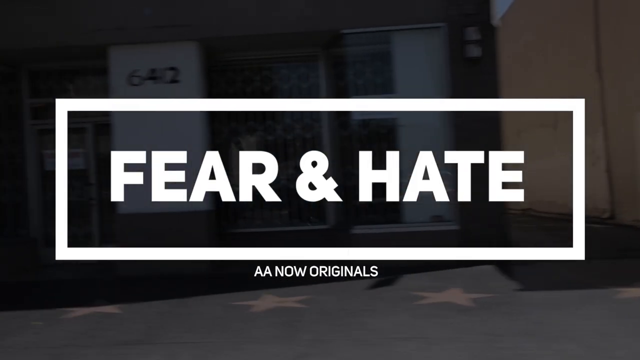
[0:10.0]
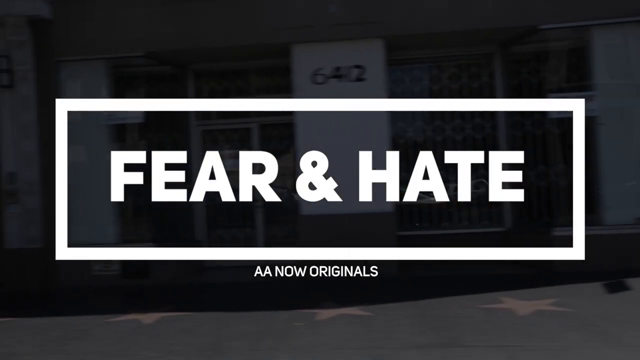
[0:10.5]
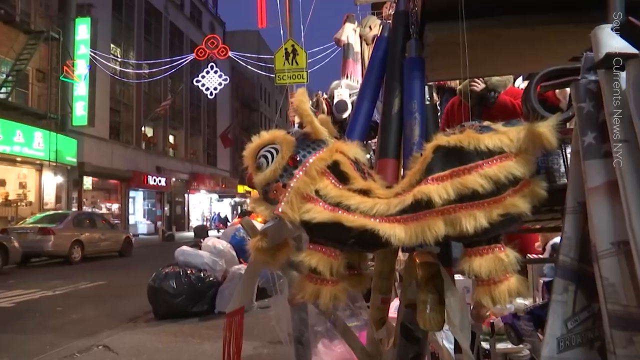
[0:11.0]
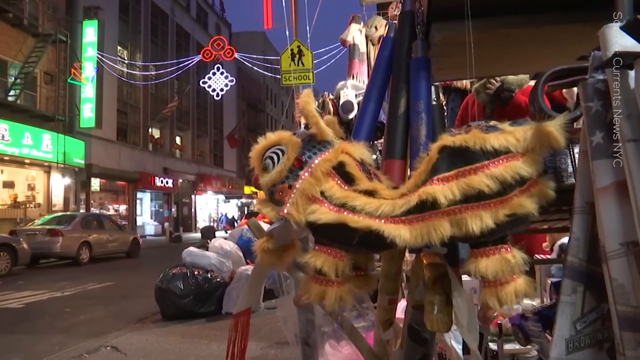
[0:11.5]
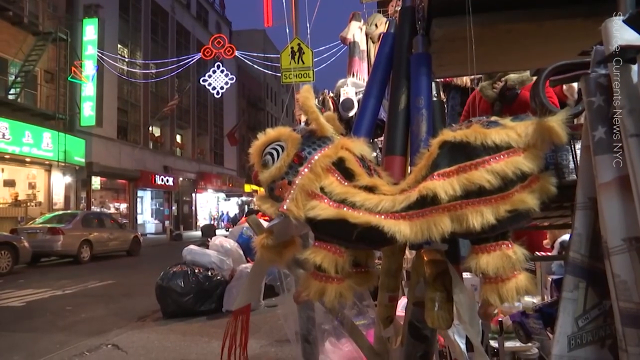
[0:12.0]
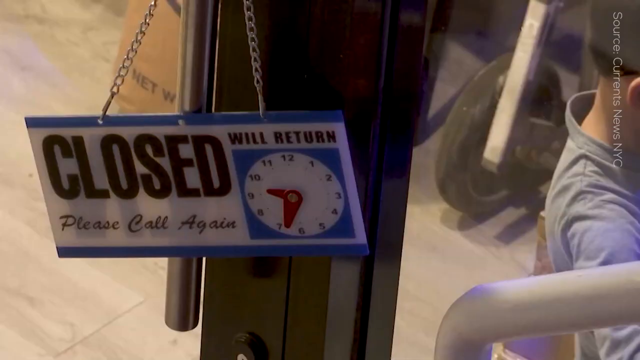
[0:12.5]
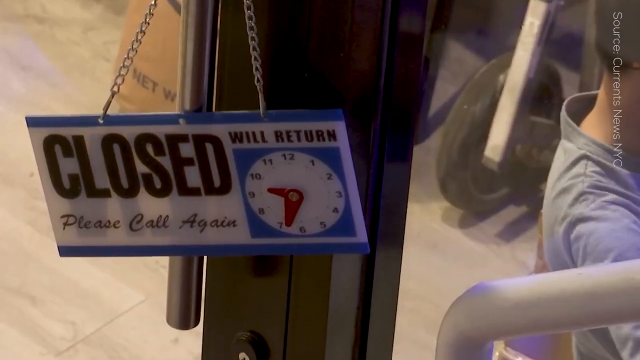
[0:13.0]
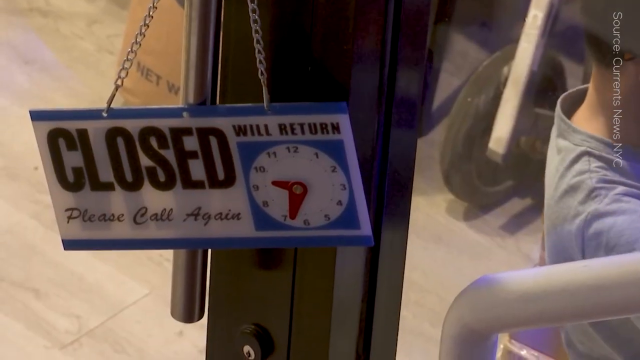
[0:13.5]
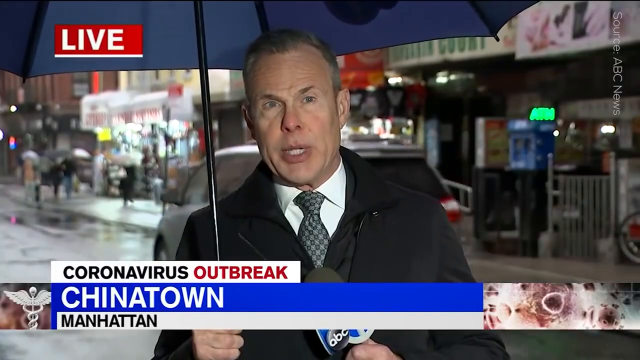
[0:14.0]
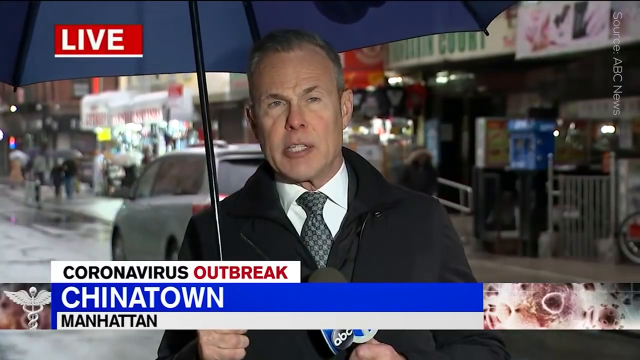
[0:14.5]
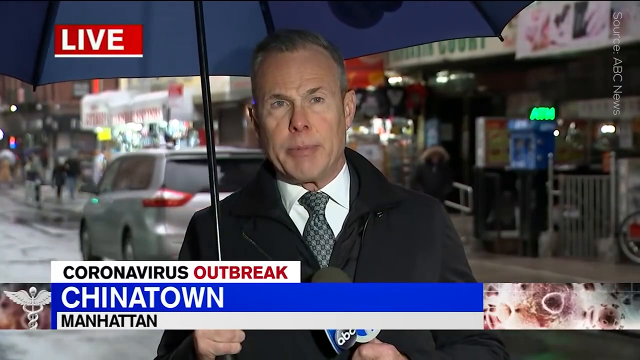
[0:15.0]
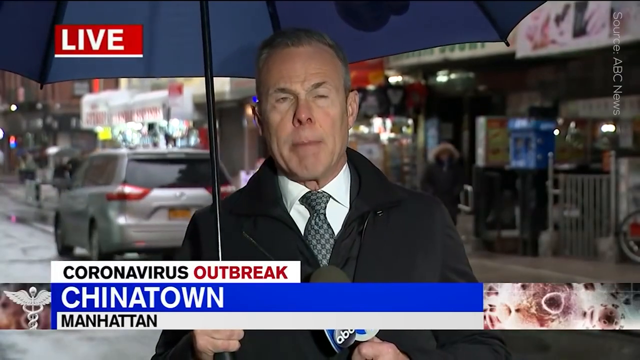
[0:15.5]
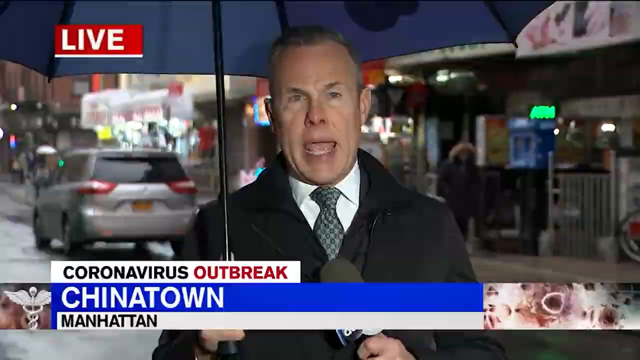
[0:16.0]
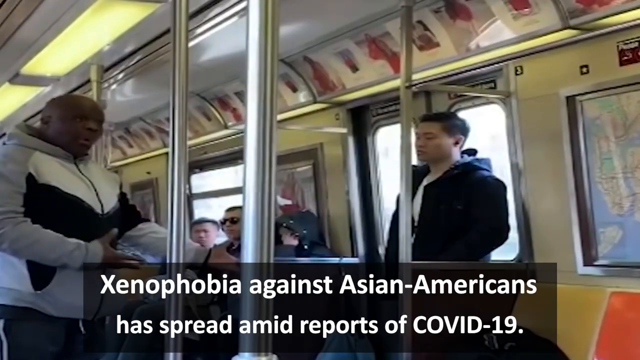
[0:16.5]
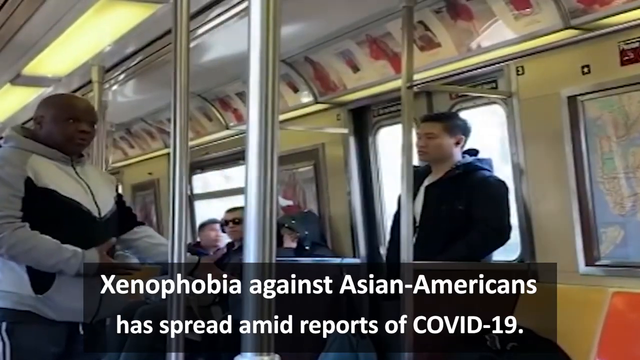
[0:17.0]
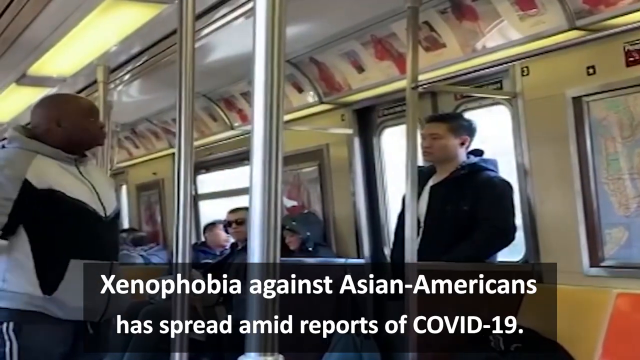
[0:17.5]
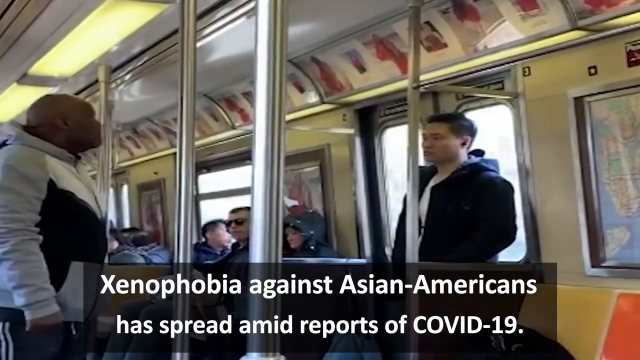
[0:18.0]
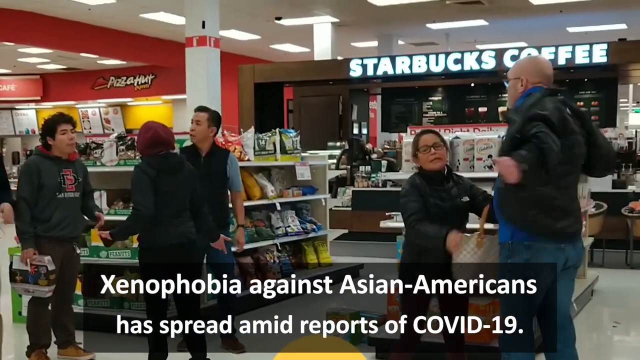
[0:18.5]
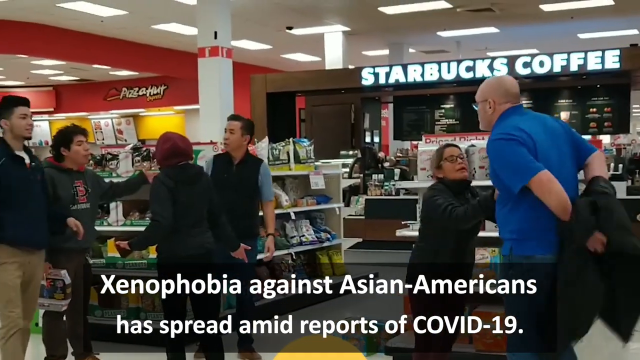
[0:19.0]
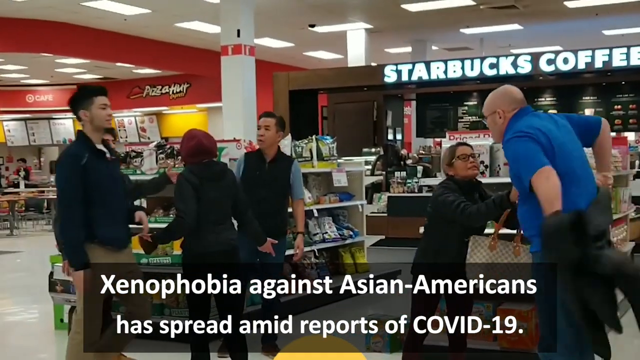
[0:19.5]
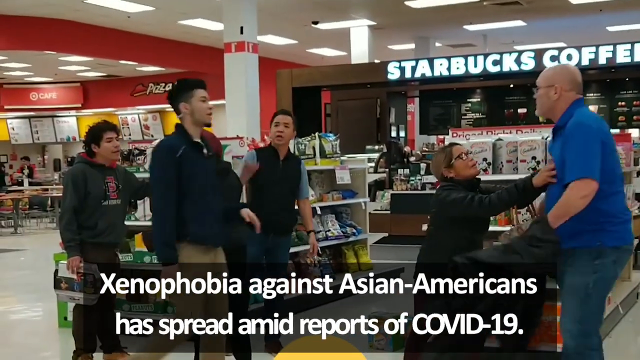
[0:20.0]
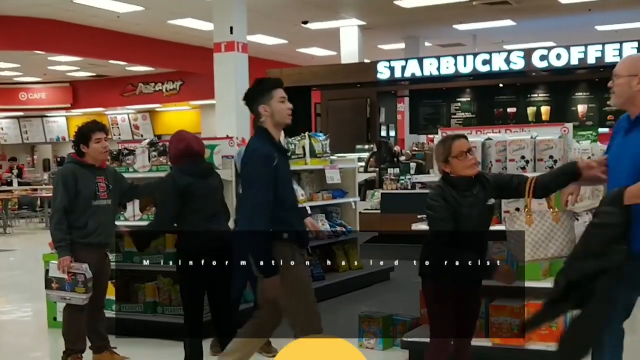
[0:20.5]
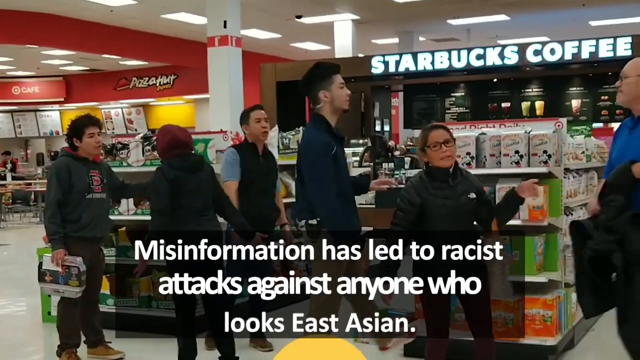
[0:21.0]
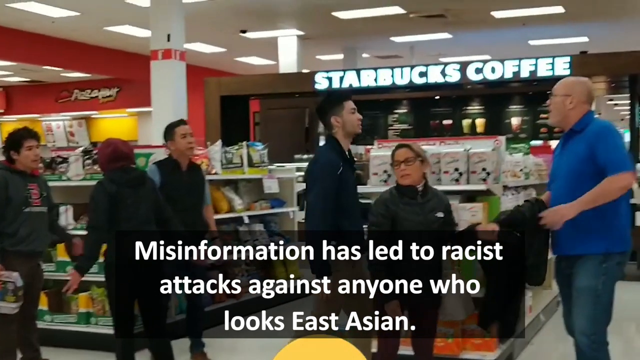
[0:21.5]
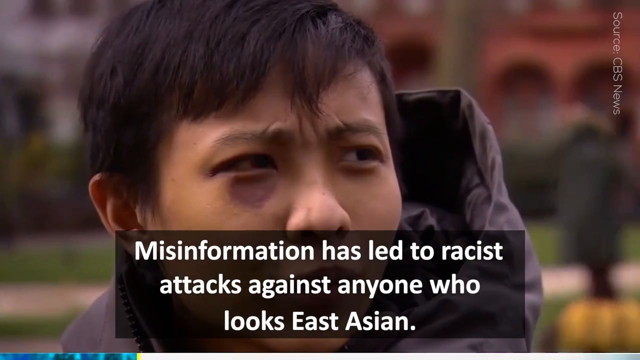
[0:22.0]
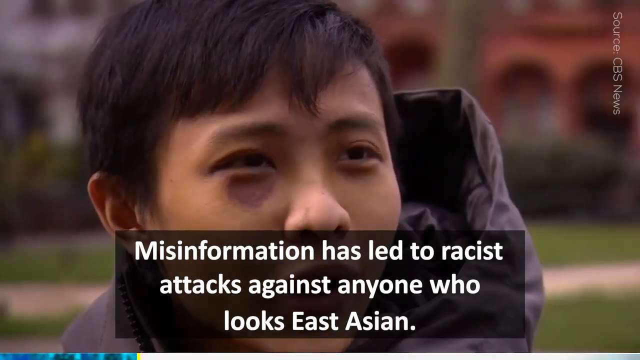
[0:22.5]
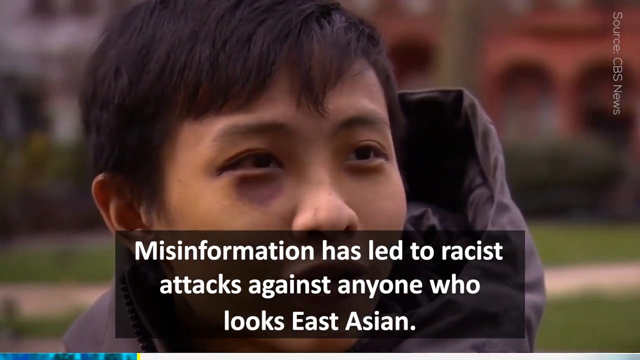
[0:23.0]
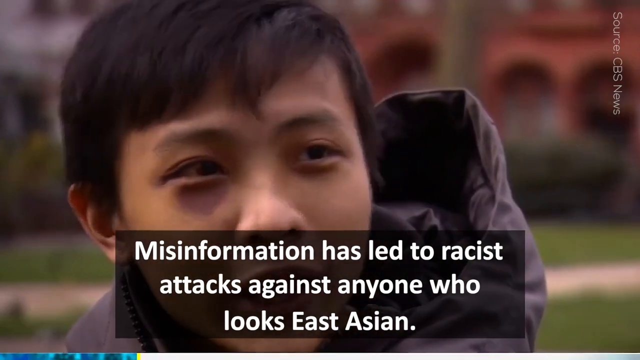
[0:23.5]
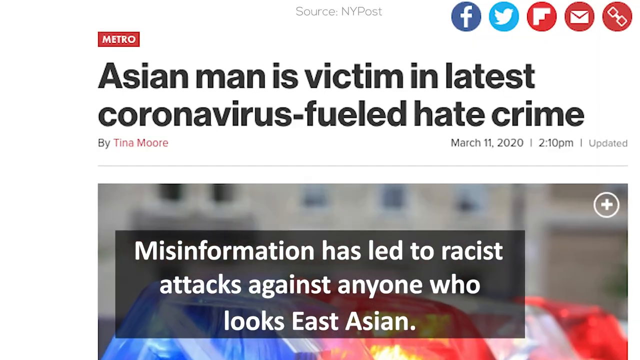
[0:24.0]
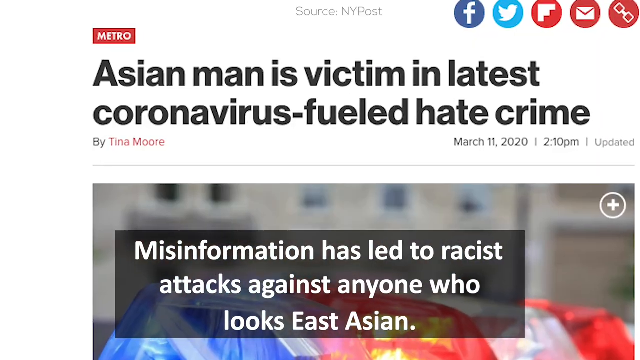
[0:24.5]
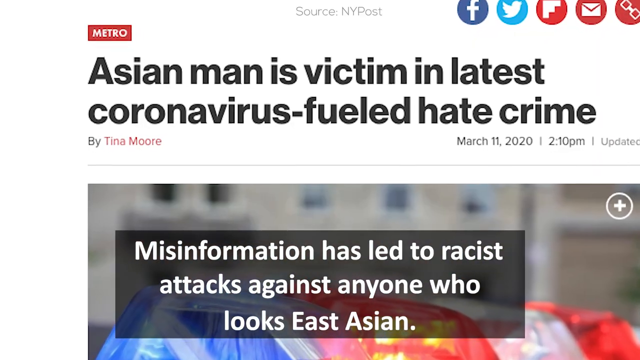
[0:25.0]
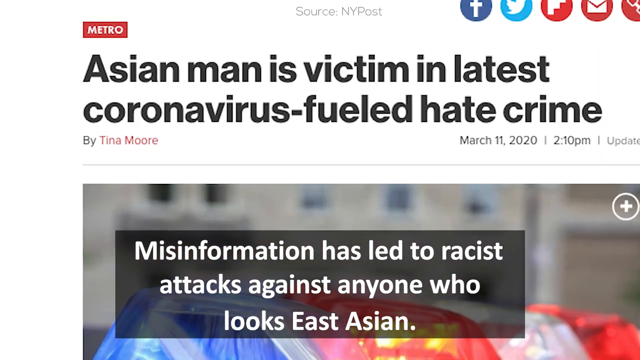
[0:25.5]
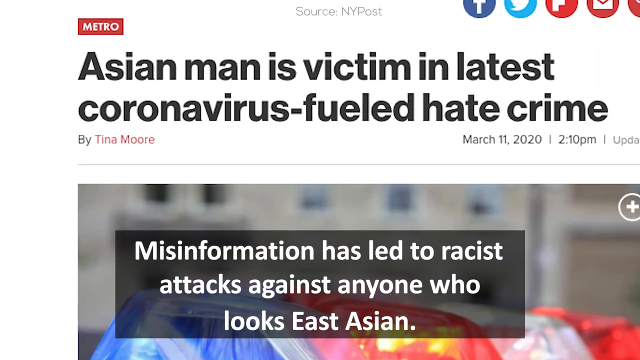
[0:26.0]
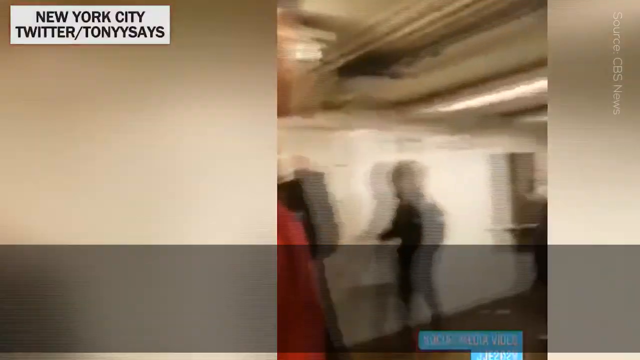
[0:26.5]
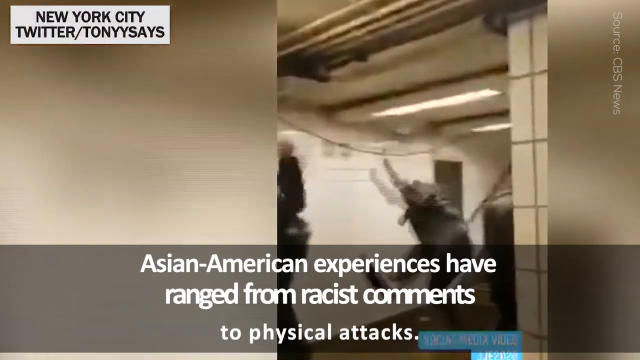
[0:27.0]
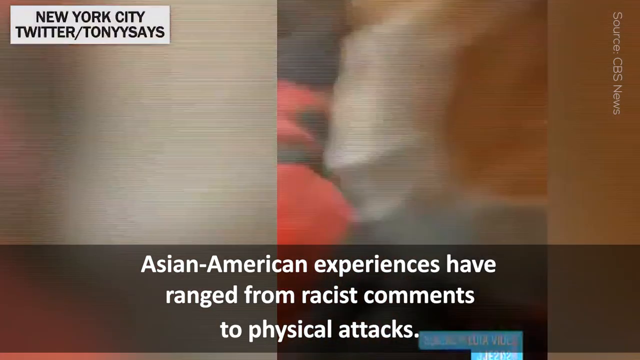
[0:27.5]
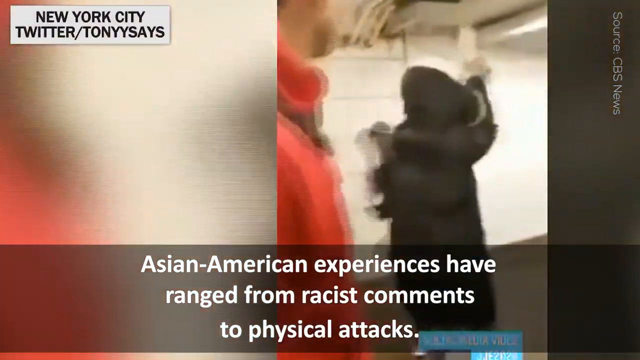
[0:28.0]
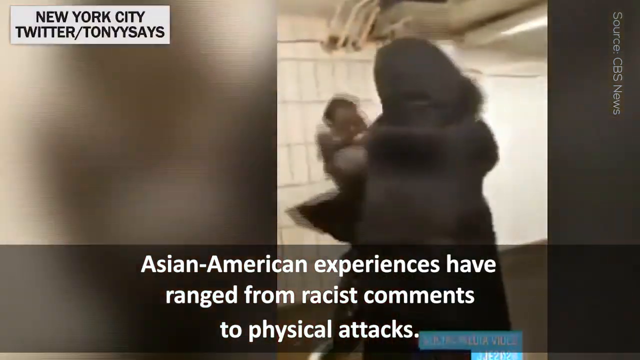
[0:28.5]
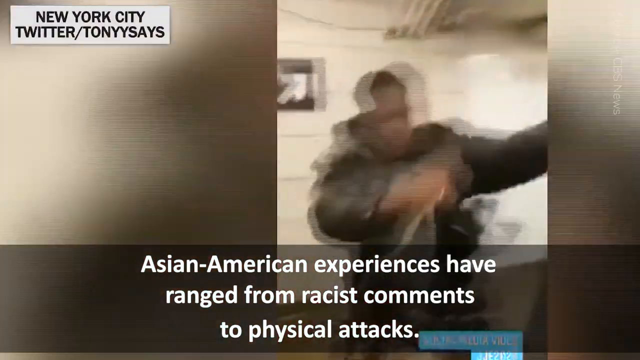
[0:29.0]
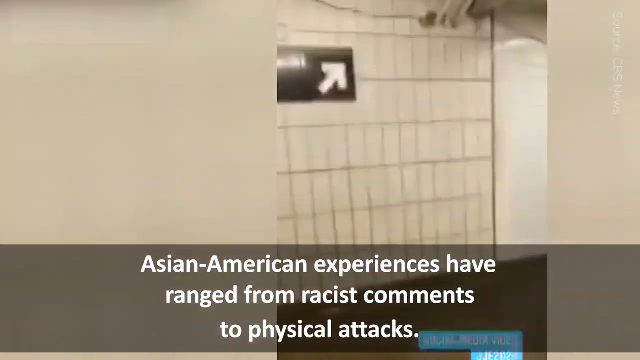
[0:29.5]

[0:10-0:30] A subtitle reads "misinformation has led to racist attacks against anyone who looks East Asian." A NY Post newspaper article appears about an Asian man being a victim in a latest coronavirus hate crime, written by Tina Moore and published on March 11, 2020, at 2:10 p.m. A video plays in which a black person attacks and brutally beats an East Asian person.